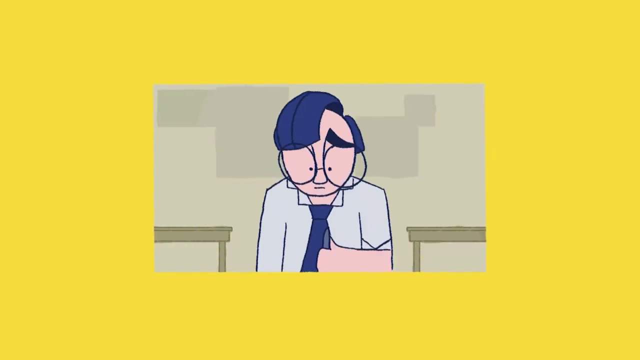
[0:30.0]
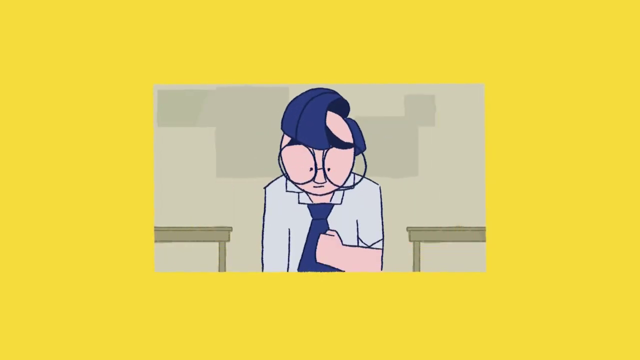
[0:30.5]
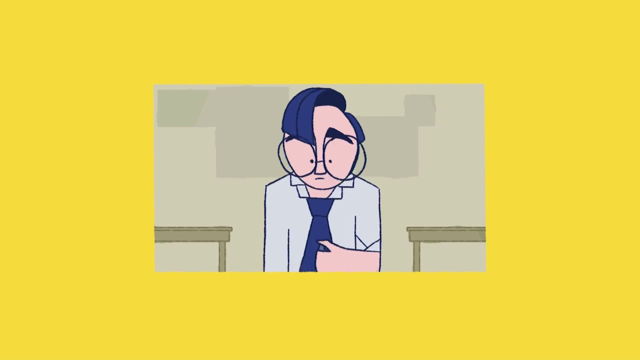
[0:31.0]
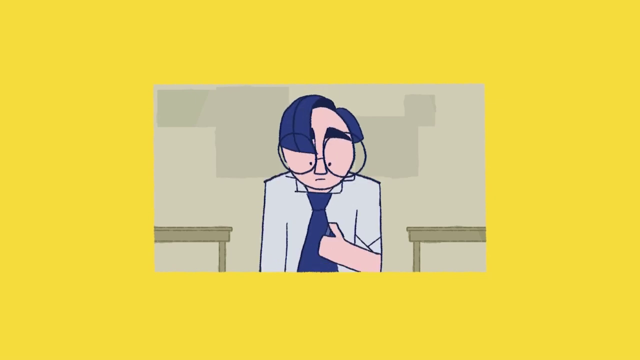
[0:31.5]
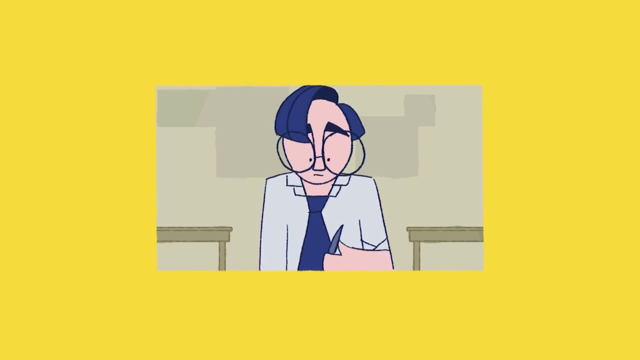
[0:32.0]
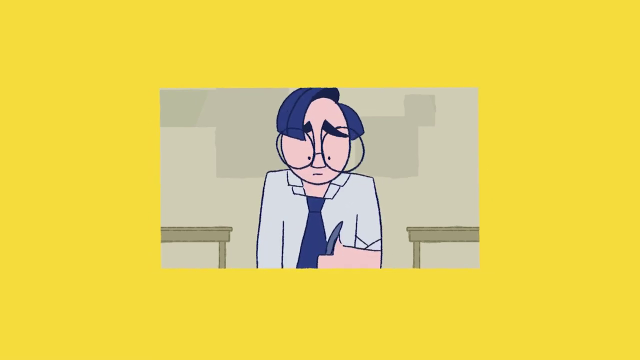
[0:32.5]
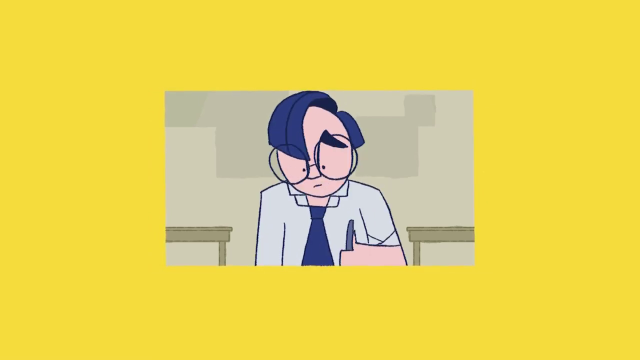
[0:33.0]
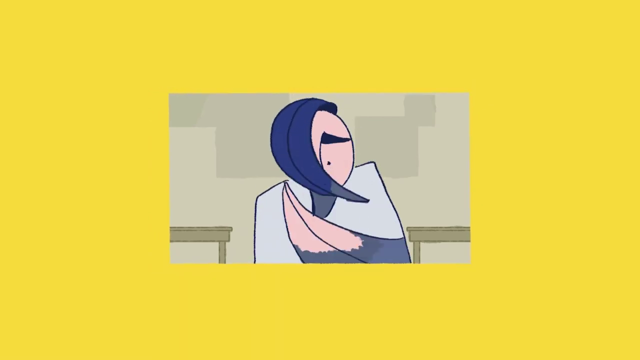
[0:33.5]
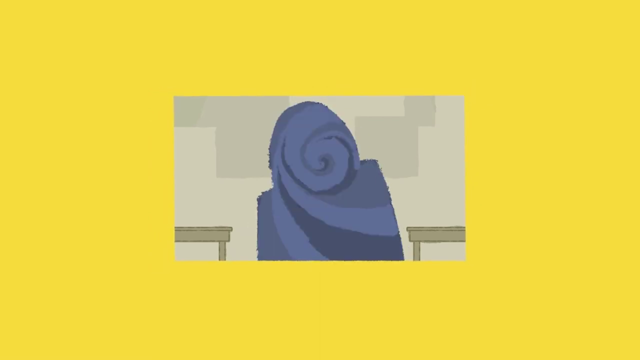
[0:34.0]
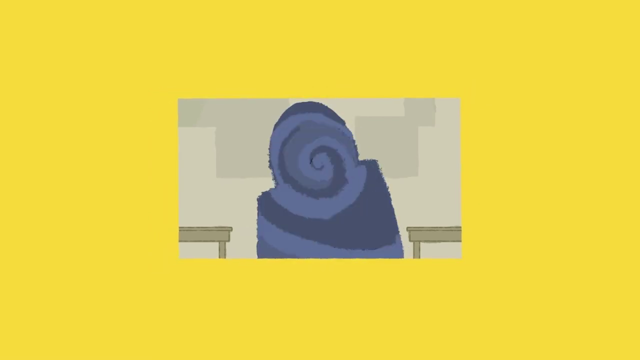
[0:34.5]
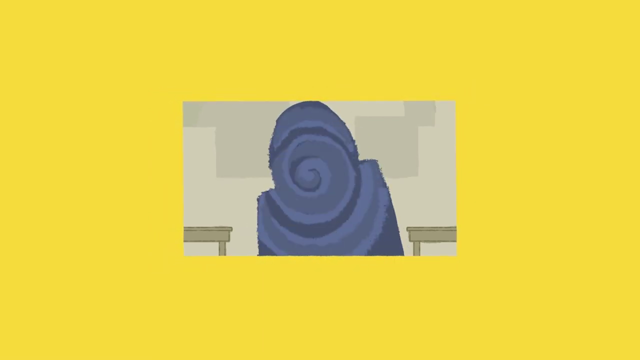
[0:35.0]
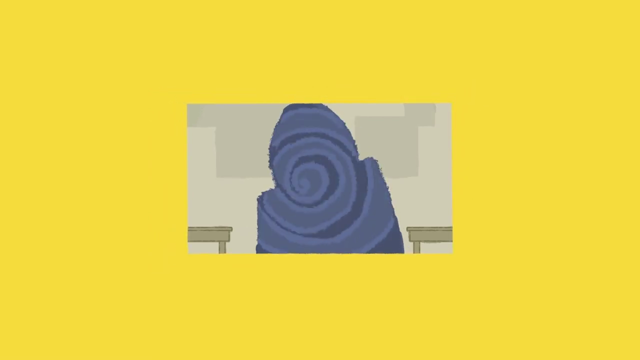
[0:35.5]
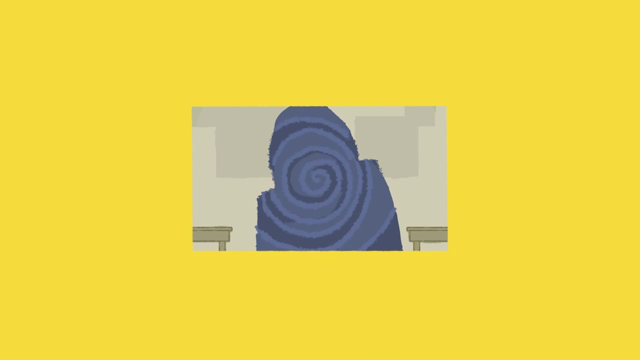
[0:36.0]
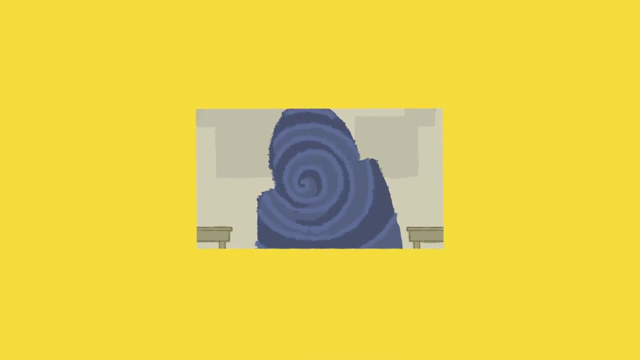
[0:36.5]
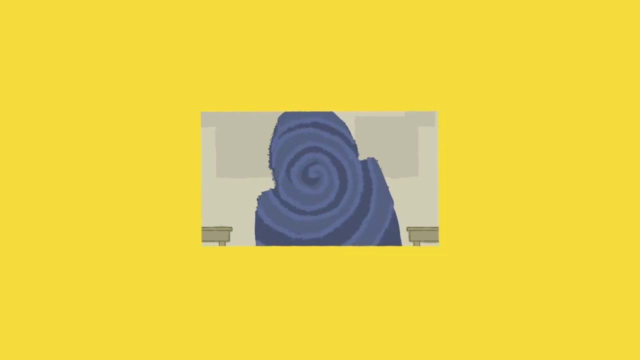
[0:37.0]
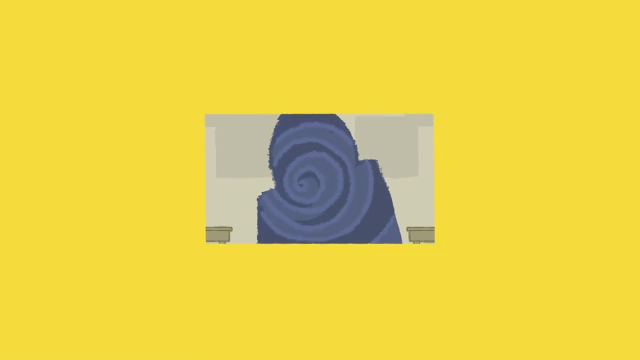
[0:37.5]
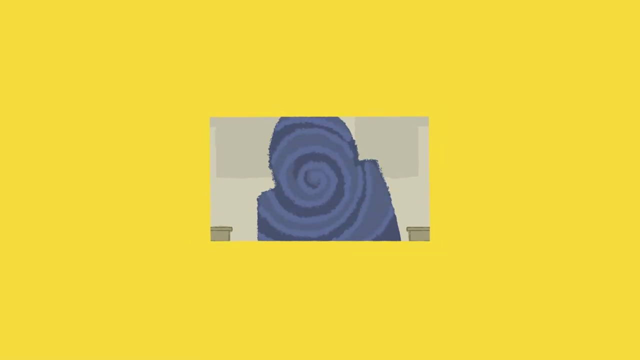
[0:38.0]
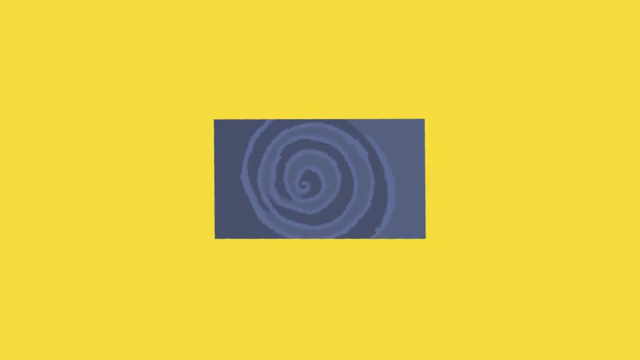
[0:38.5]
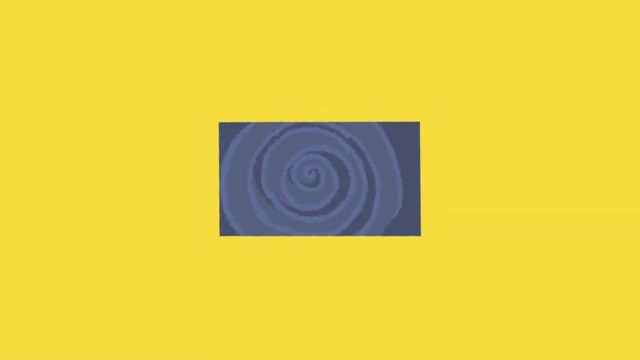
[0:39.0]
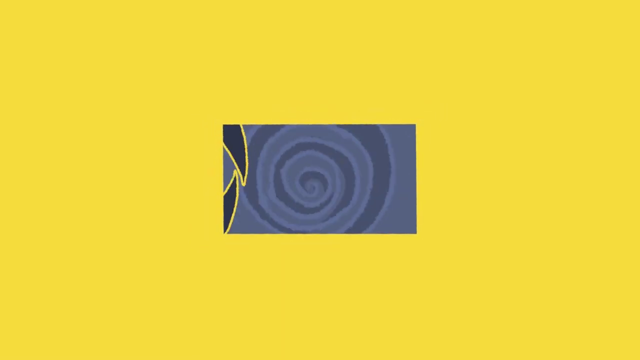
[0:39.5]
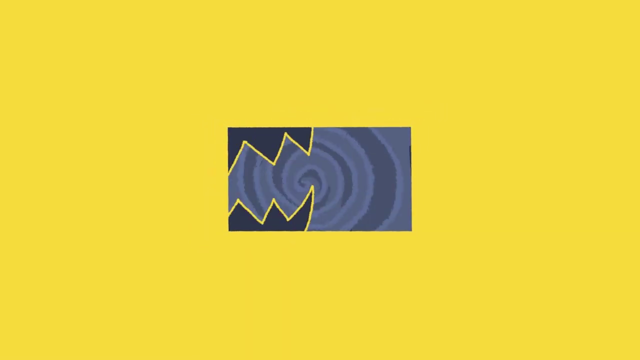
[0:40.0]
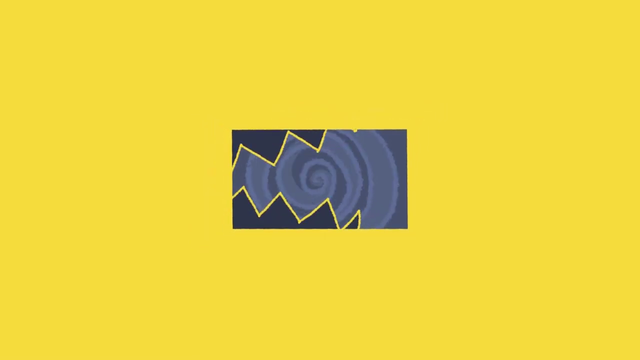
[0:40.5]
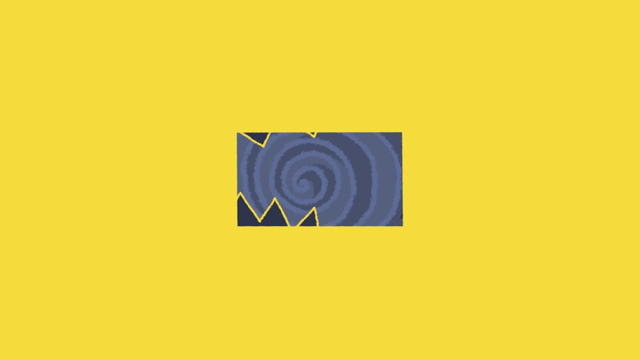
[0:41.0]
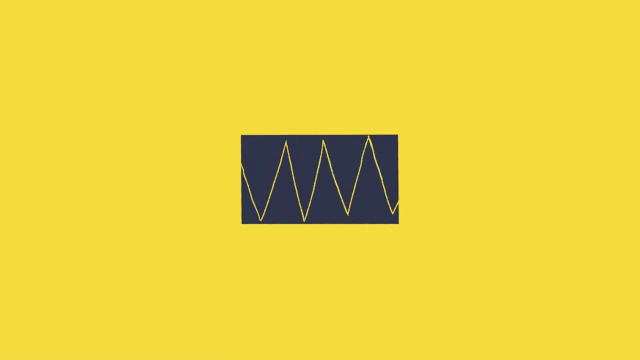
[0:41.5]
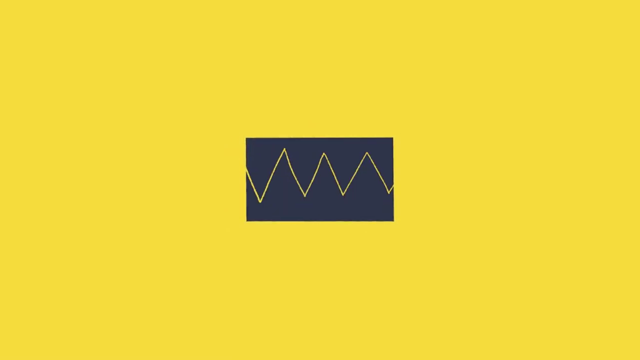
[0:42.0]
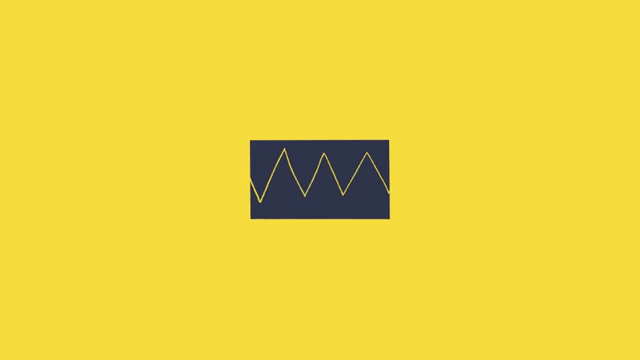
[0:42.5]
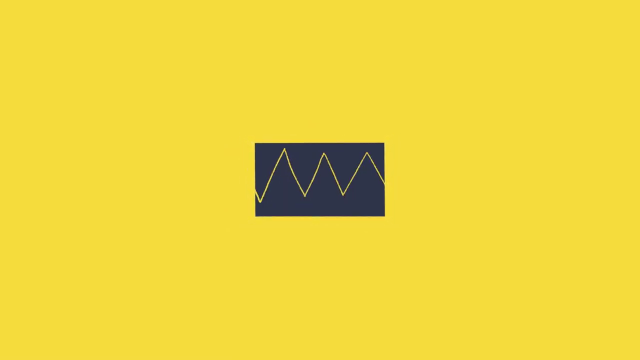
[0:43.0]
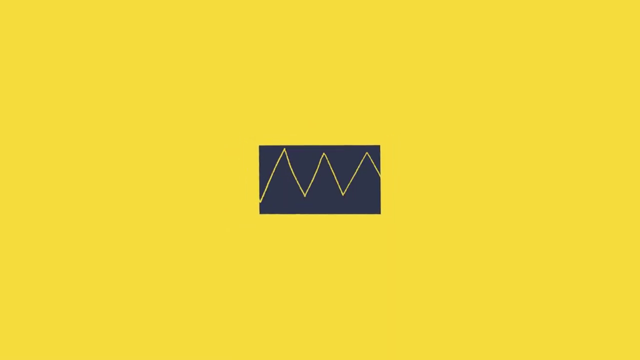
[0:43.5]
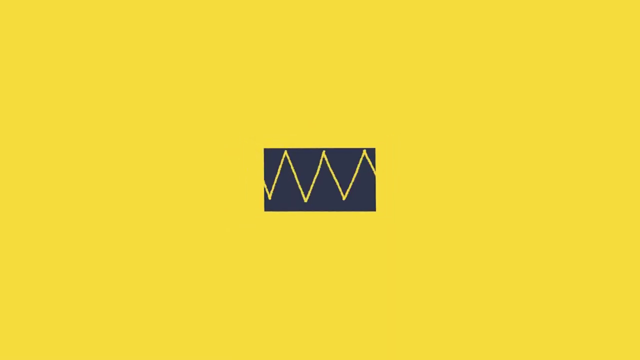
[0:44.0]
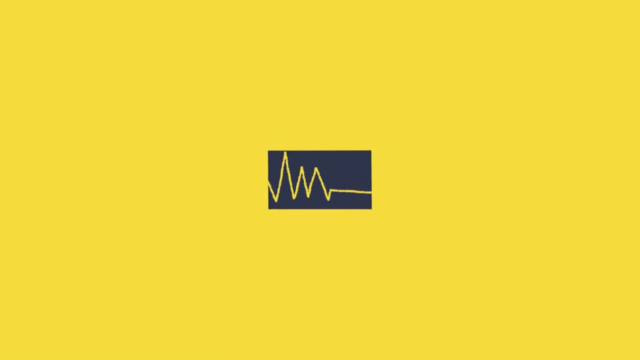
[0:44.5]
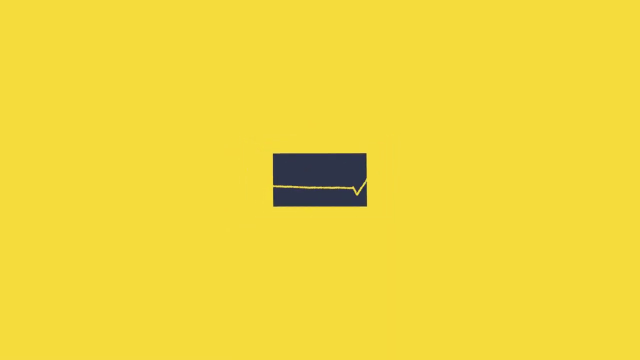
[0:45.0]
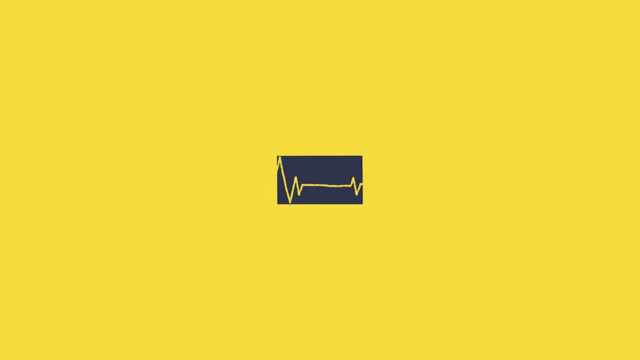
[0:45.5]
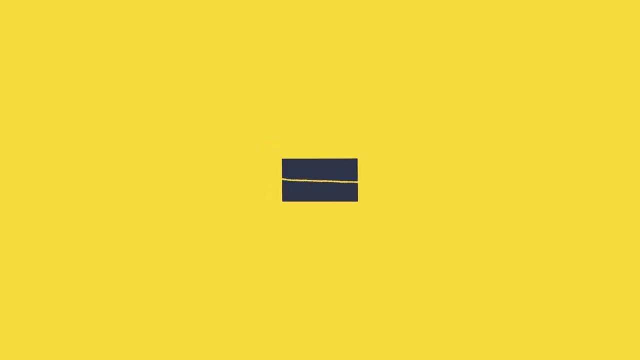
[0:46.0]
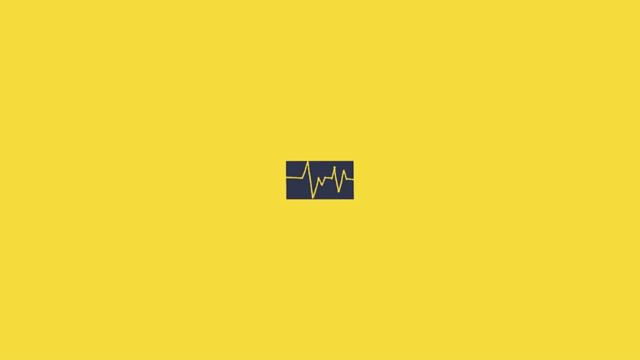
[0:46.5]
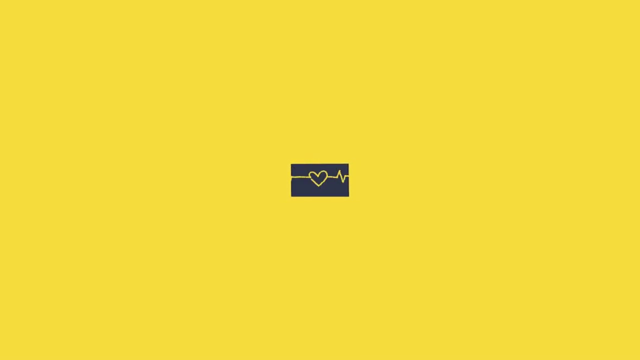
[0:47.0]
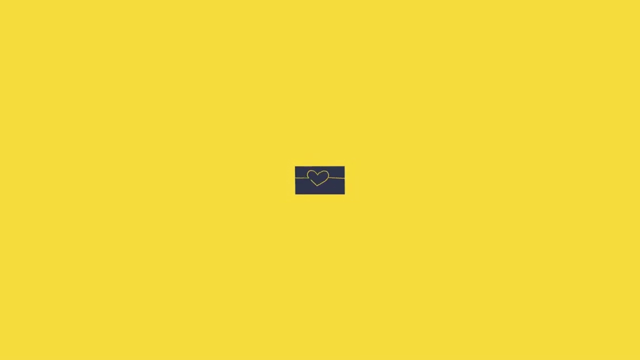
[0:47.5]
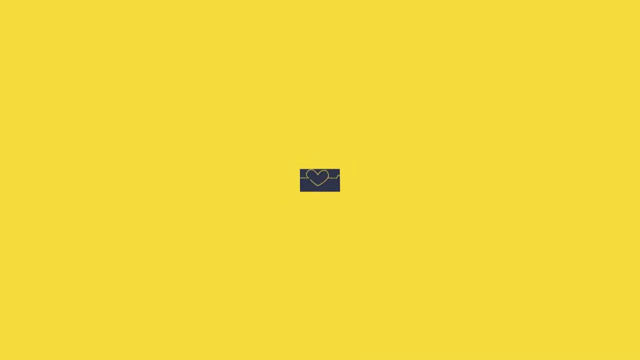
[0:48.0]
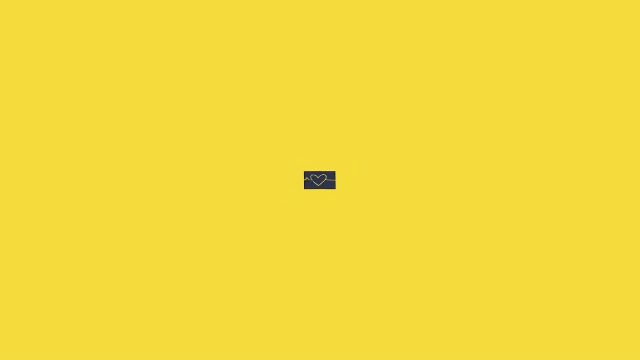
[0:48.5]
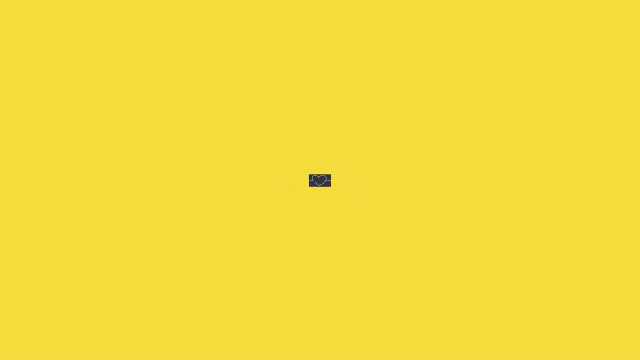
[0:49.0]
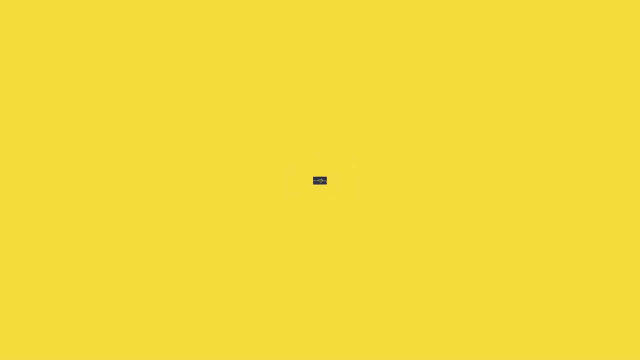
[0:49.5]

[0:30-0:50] The cartoon character sits at work looking very sad and alone, his tie loose, looking down and apparently clicking the clicker on a pen over and over. The border around him slowly shrinks, and the pen clicking he concentrates on takes over his whole body. It turns into a grey swirl as the borders get smaller and smaller. A depiction of large monster teeth comes in from the left and closes over the whole screen, then the teeth slowly transform into the outline of a heartbeat moving along. Meanwhile the yellow background slowly gets smaller and smaller until it is gone.